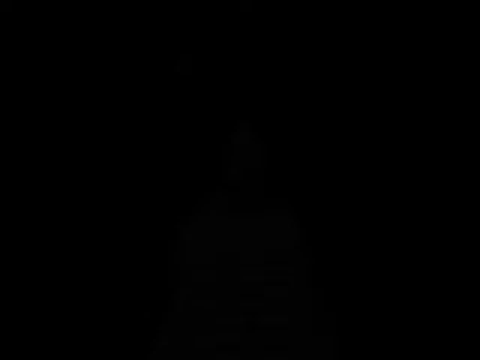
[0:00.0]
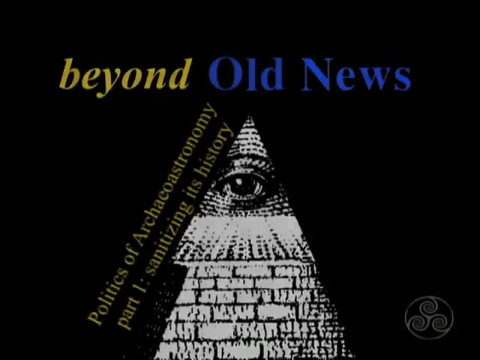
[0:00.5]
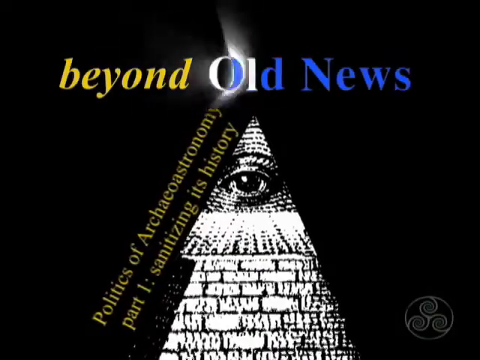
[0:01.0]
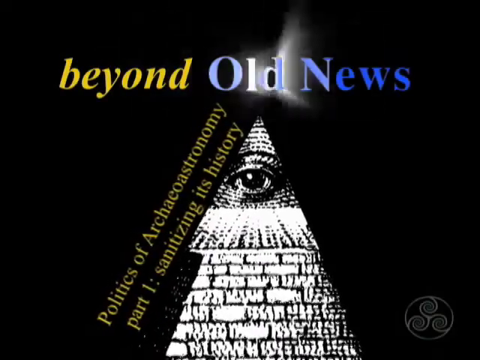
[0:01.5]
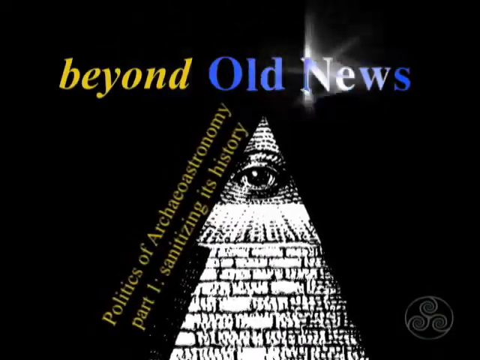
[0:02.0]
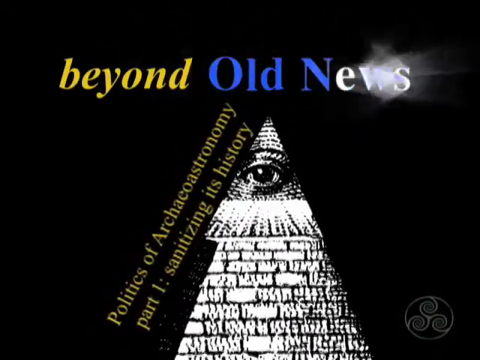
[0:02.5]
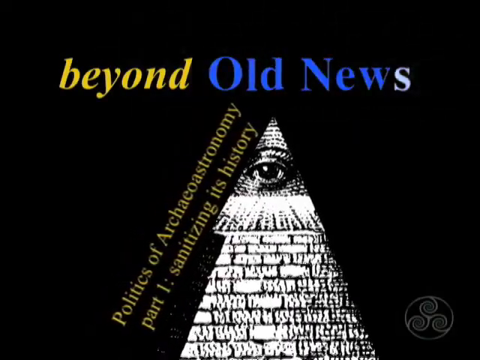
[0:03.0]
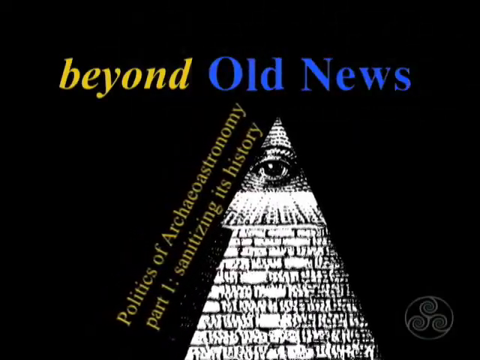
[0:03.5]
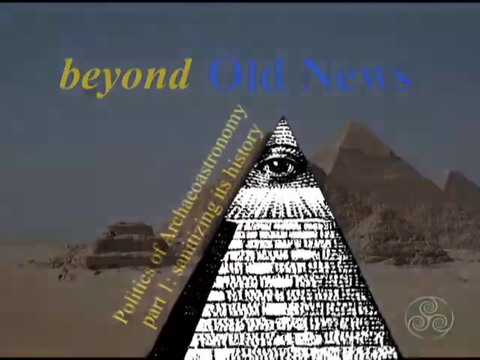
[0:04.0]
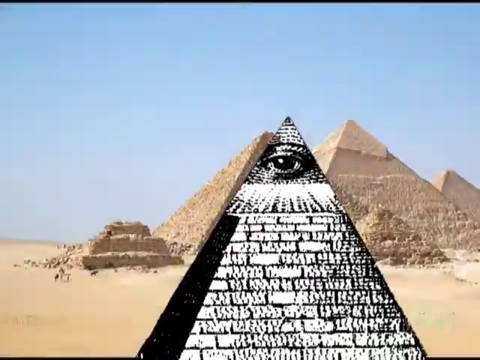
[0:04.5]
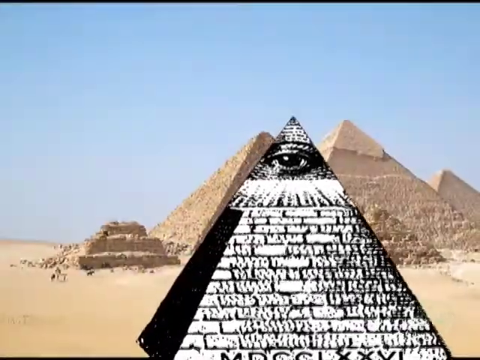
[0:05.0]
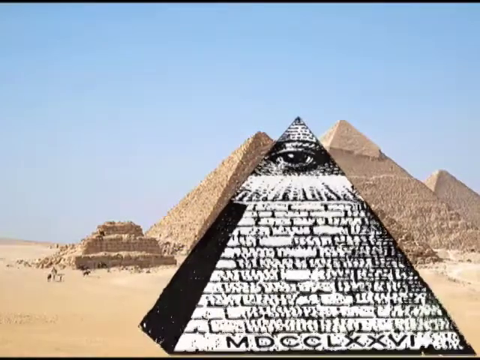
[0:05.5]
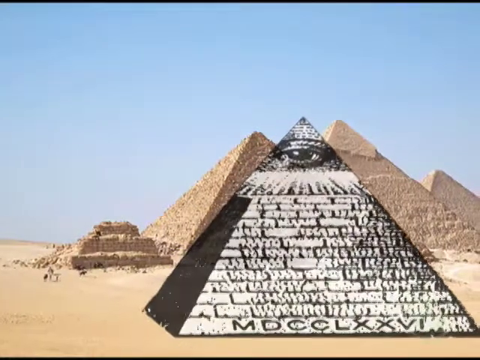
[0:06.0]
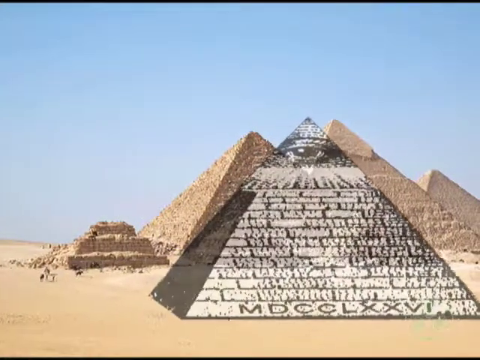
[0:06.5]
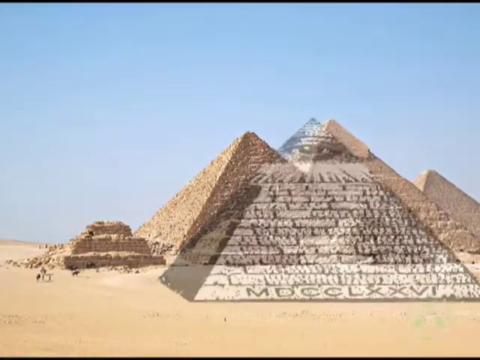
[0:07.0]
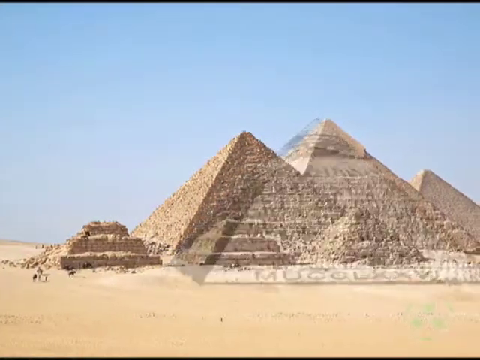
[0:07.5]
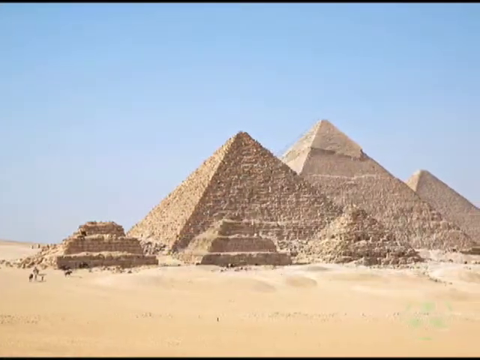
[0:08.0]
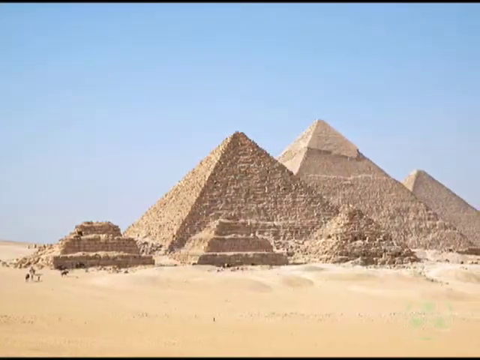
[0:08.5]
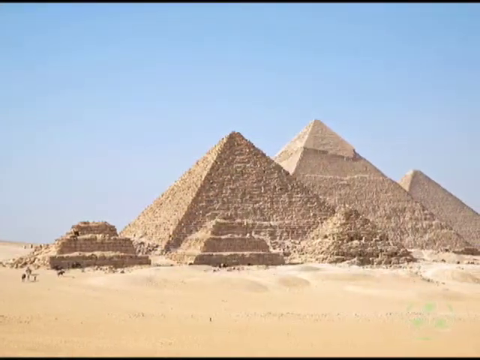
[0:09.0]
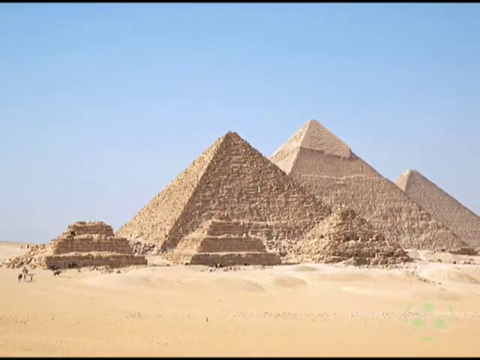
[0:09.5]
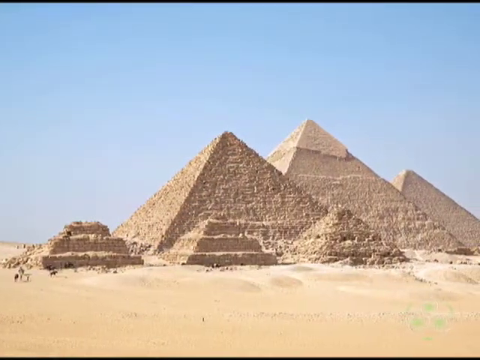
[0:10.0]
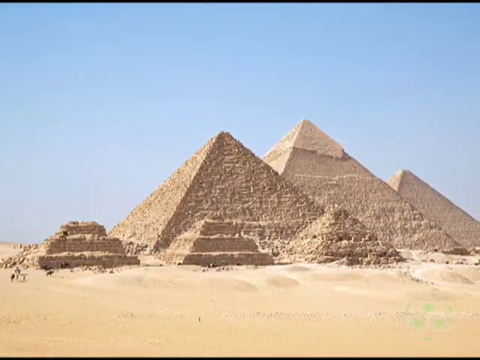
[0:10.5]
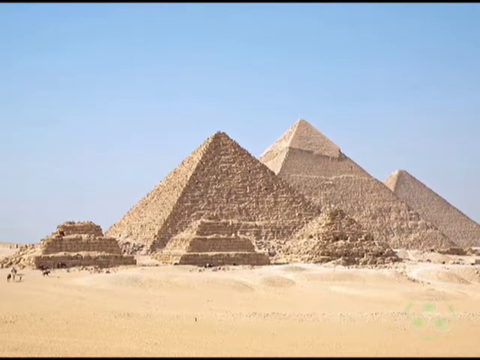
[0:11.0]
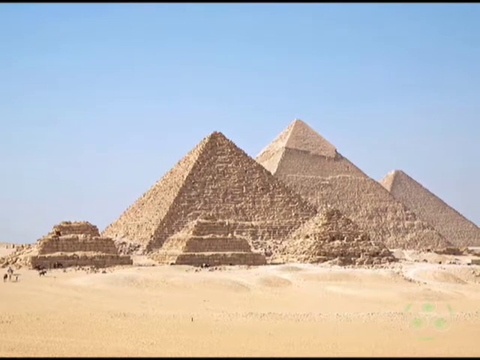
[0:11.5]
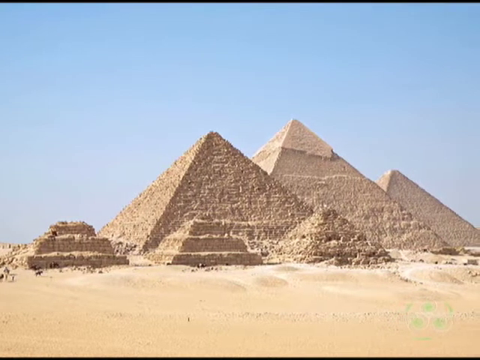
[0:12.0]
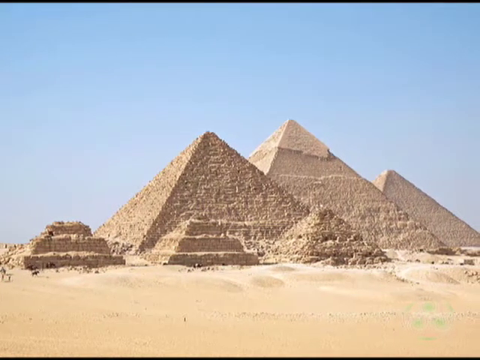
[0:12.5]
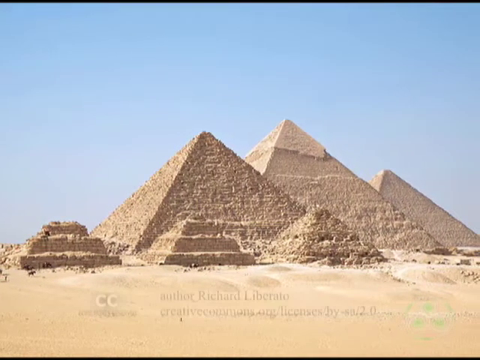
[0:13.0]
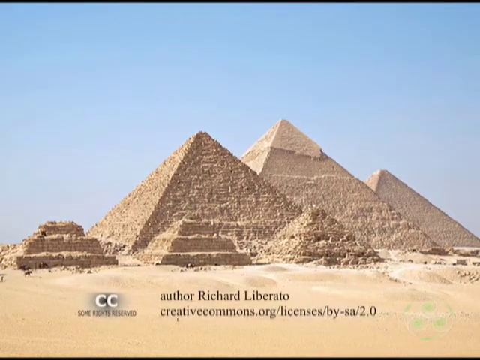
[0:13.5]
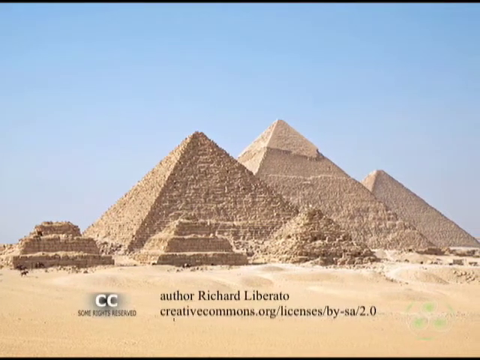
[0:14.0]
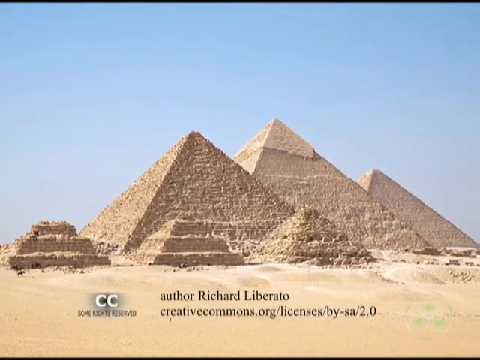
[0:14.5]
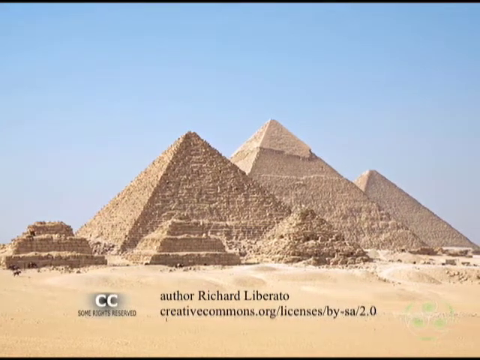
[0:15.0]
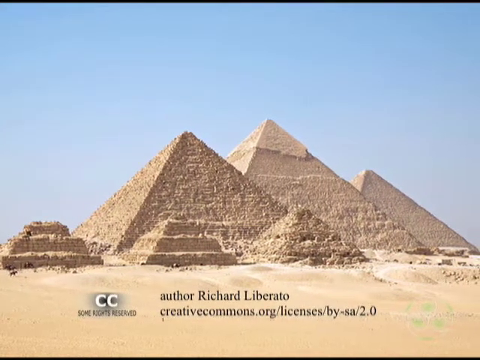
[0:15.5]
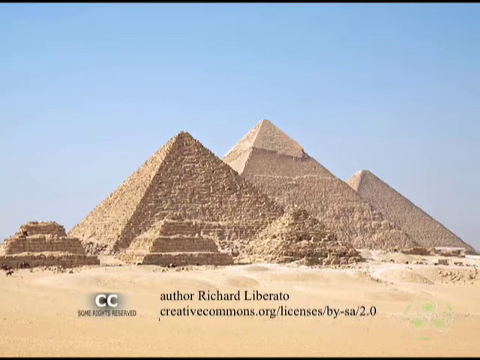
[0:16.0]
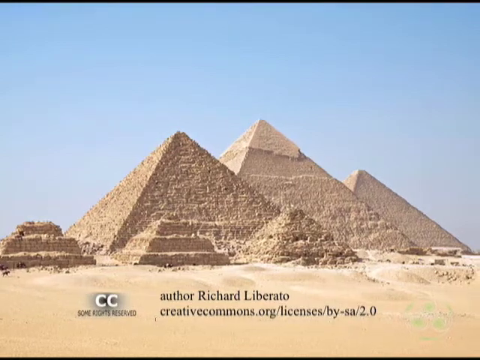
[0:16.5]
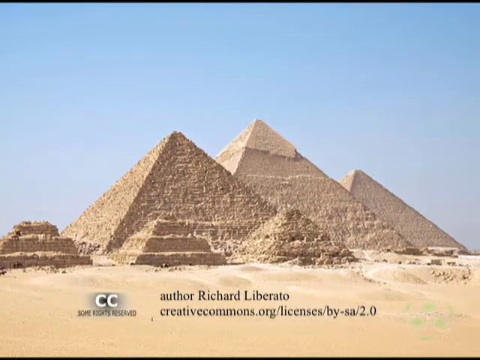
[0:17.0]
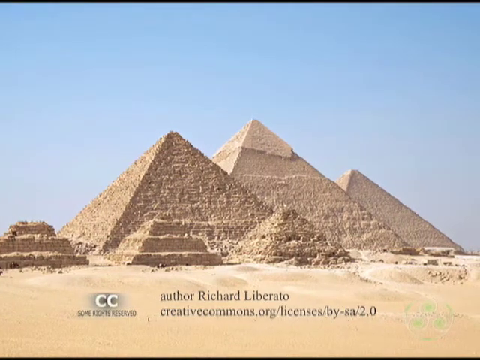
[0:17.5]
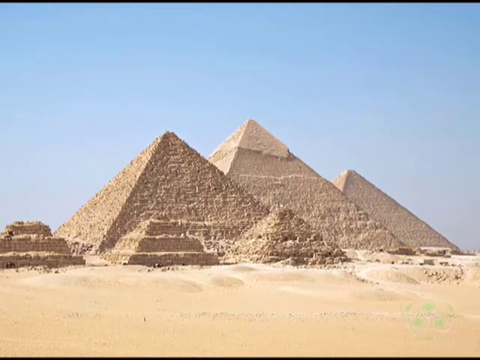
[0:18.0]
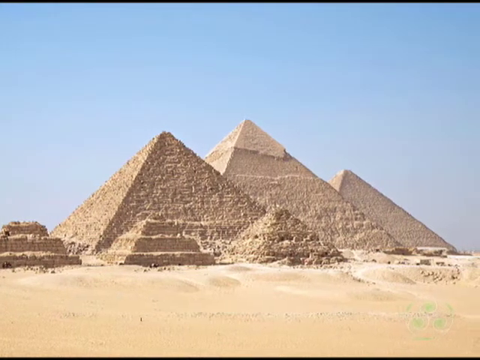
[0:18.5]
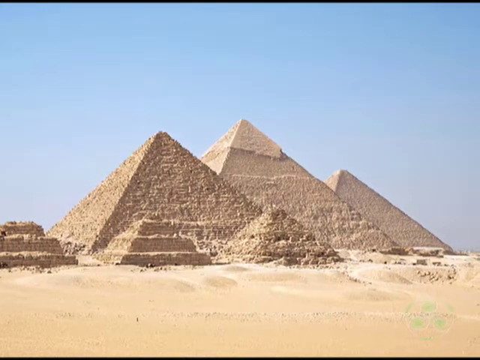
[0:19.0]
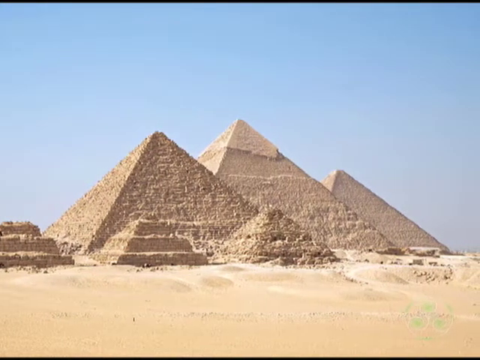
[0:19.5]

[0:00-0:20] A pyramid with an eye on top is shown against a background with a clear blue sky at the top; the background is completely clear. Text on the screen includes "Arthur" and "Richard Loverato".